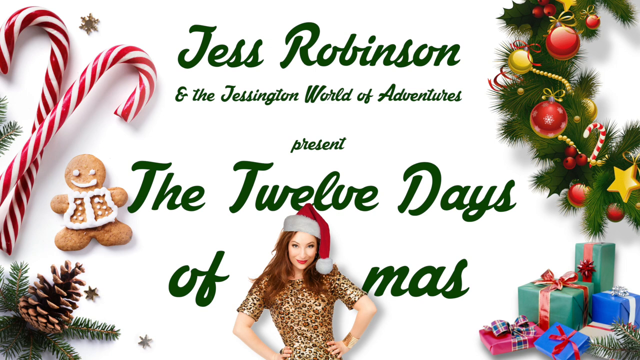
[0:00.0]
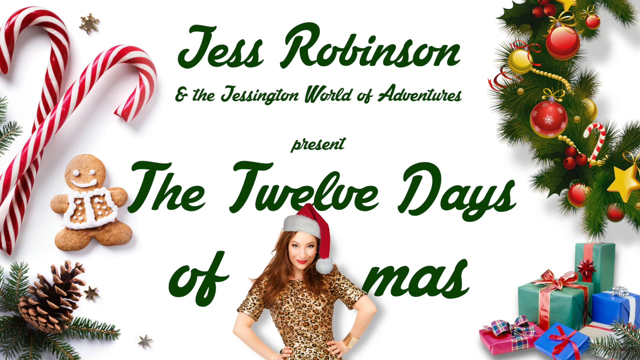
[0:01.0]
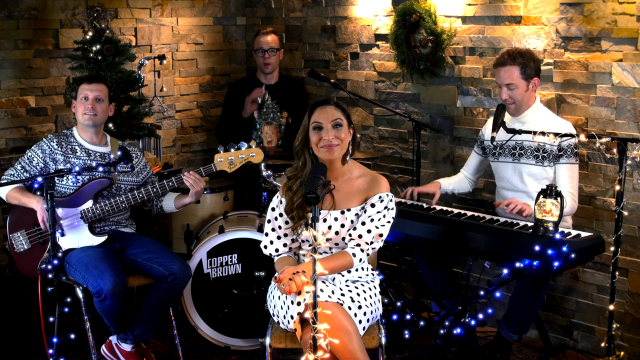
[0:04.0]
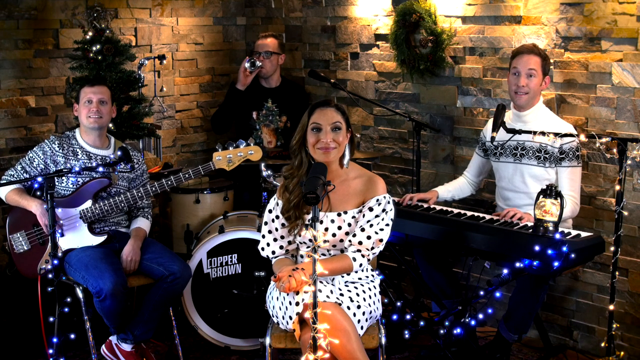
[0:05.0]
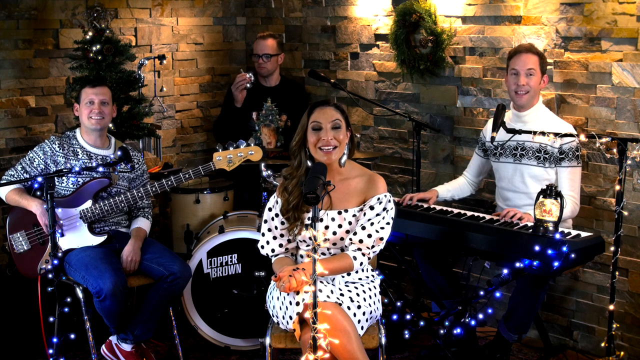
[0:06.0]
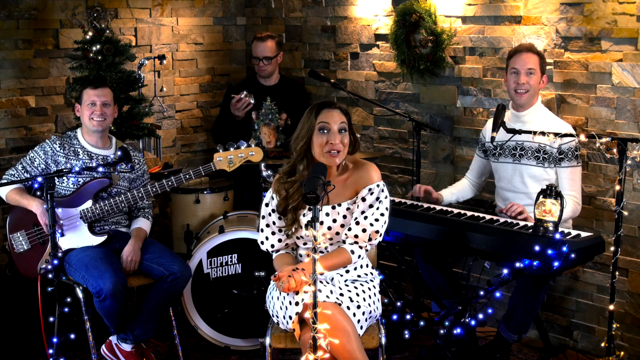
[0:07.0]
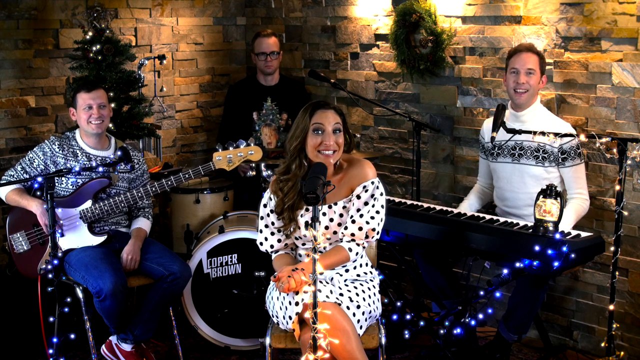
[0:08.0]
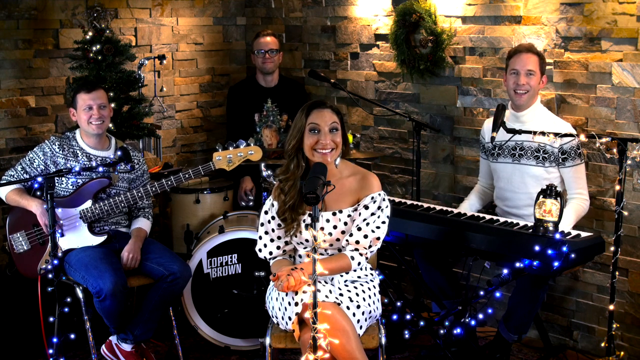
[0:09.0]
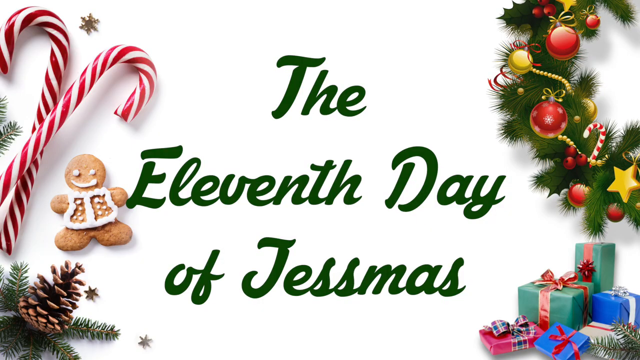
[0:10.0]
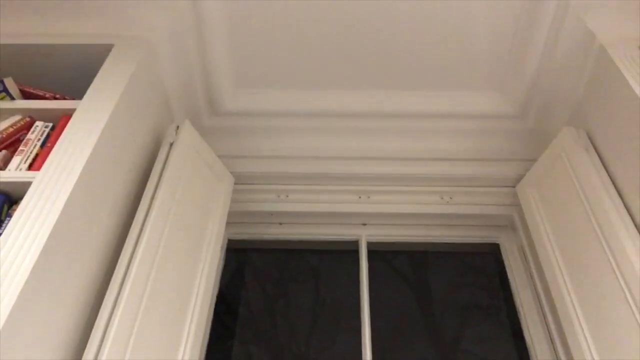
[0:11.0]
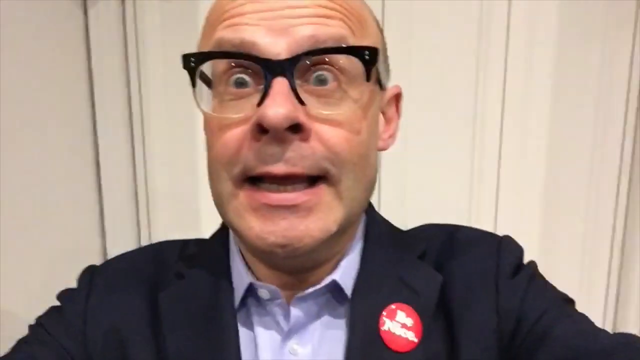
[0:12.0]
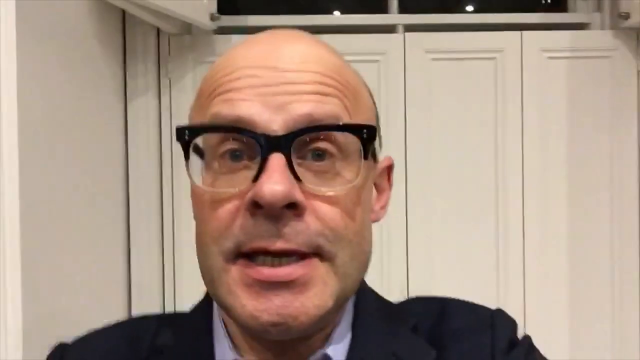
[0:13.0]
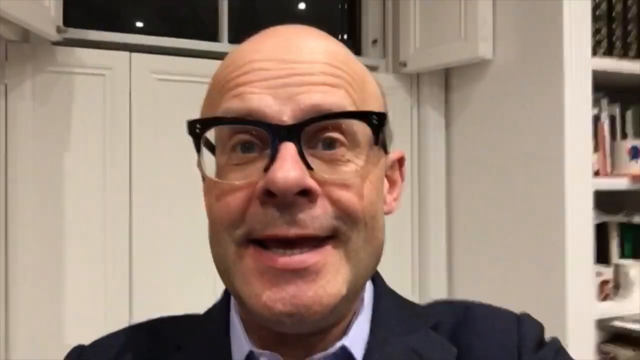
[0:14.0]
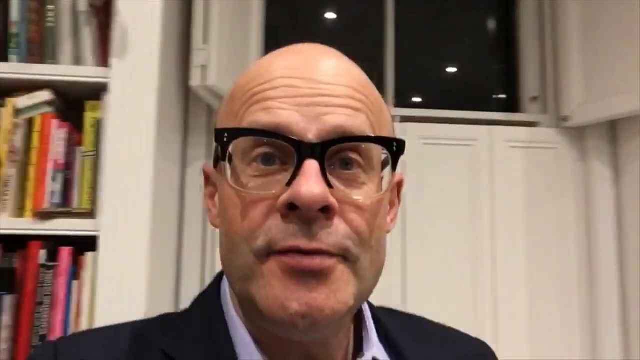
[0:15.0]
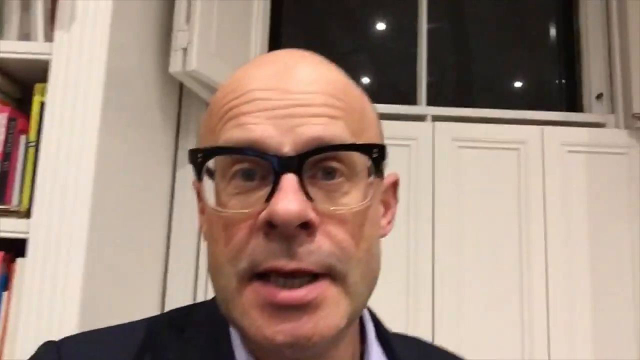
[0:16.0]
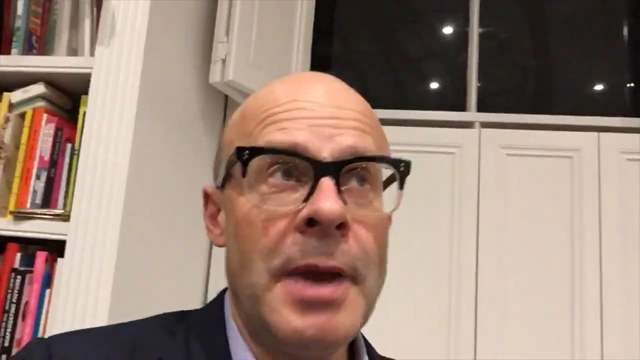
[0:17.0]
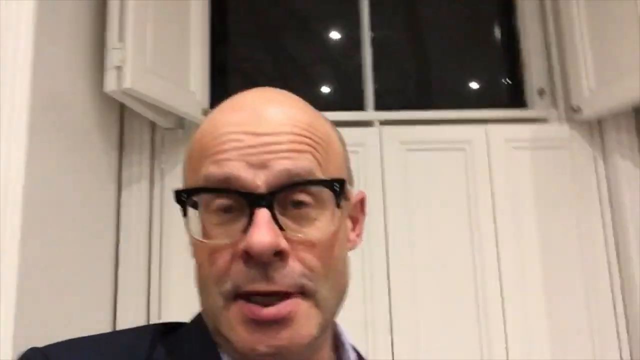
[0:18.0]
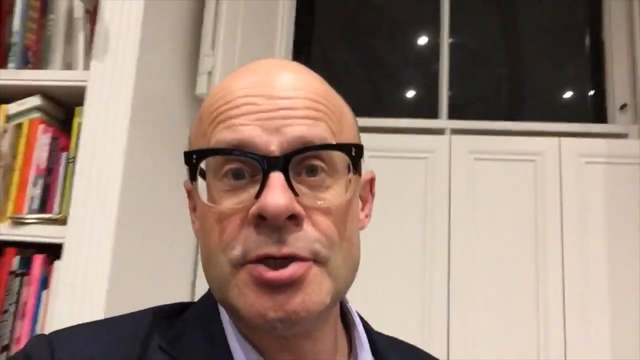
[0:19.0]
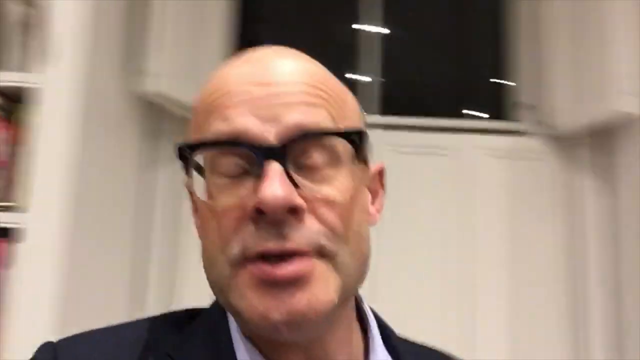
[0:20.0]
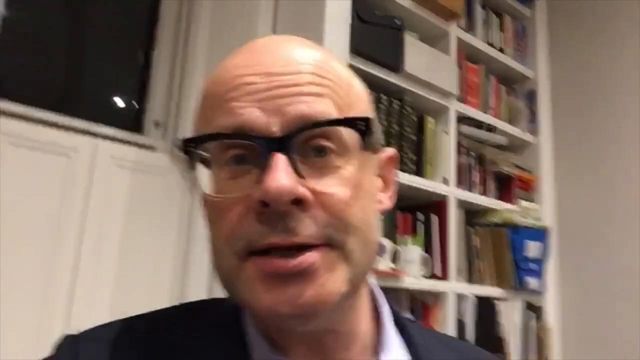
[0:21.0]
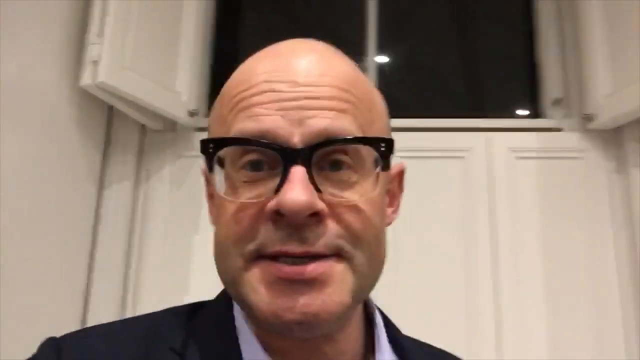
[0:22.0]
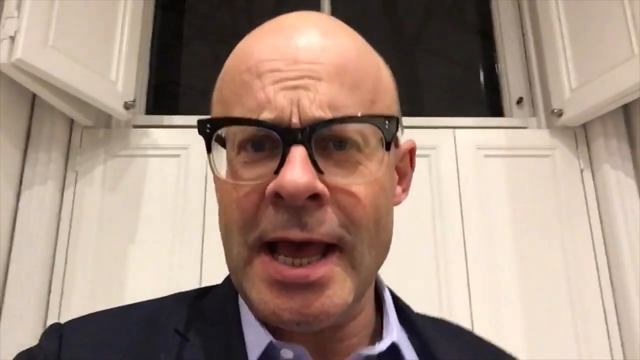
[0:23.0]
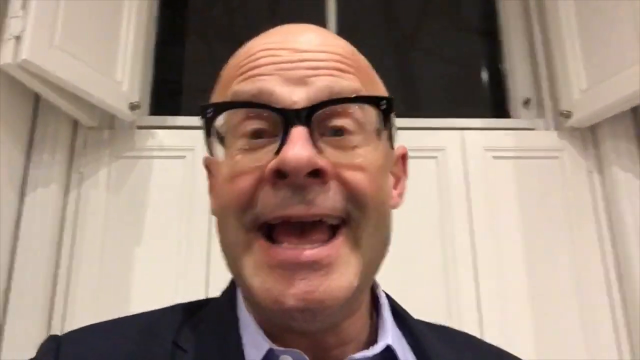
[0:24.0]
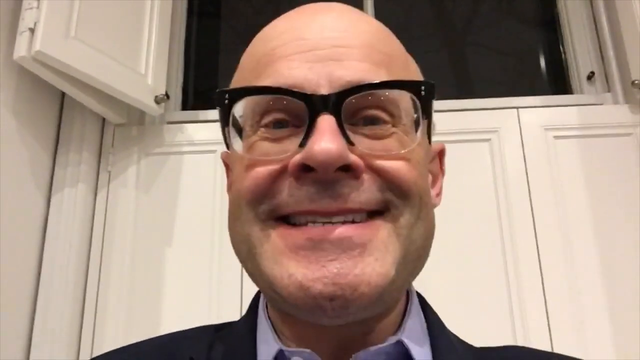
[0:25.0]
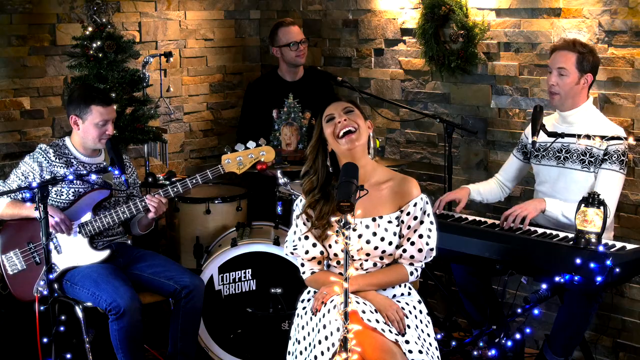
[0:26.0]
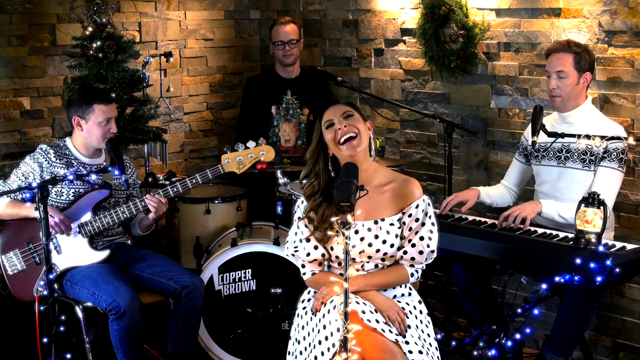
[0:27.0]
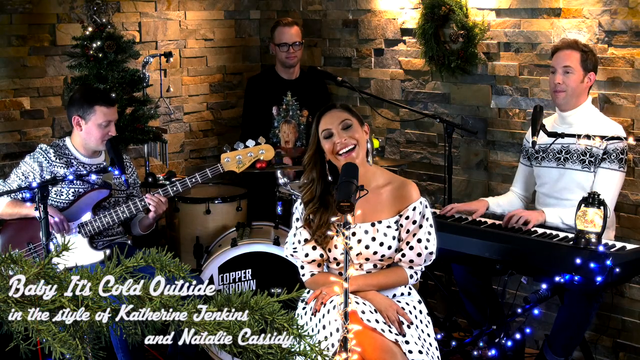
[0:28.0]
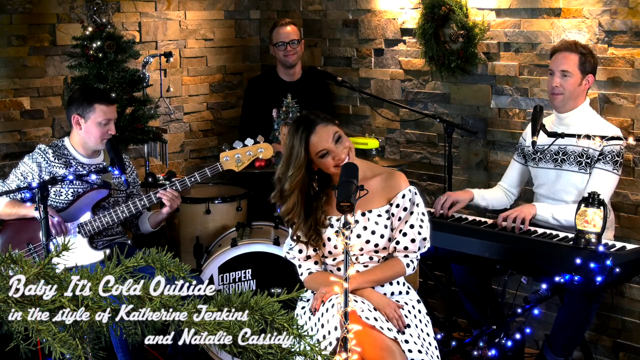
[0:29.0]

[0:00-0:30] The video starts with a computer graphic about Jess Robinson presenting the 12 days of Christmas, showing a woman in a Santa hat. The graphic ends and live footage begins: the same woman is now seated with a microphone on a stand in front of her. Three men are with her, up on what looks like a stage: one has a guitar, one is at a drum kit, and the other is seated at a keyboard; they are clearly musicians. One of them talks into a camera, recording something like a selfie video. He nods his head a lot and looks up when he talks, and he uses his eyebrows a lot, which creates many wrinkles on his forehead. After this, the video returns to a shot of the musicians on the stage, showing that this man is the drummer, the one sitting at the drum kit.